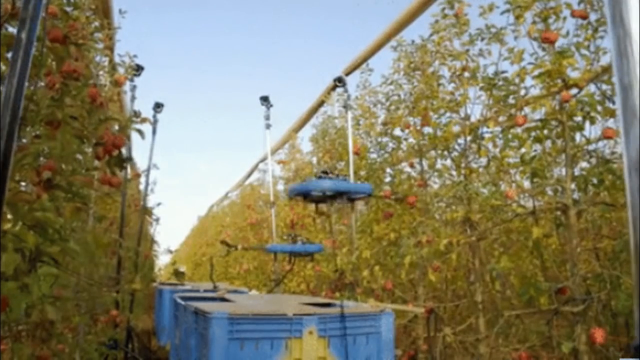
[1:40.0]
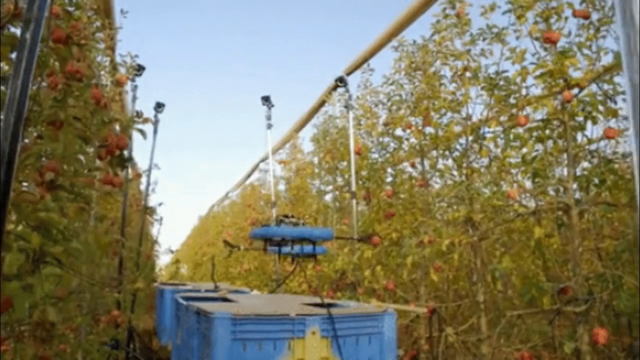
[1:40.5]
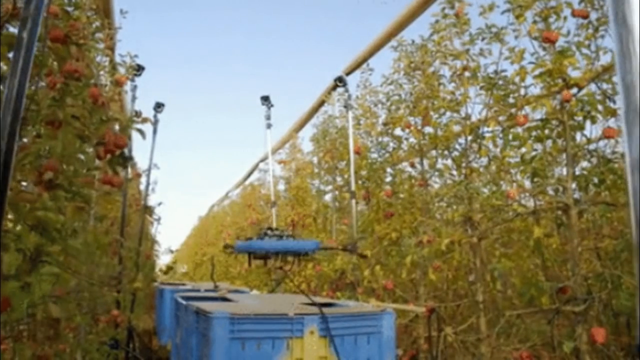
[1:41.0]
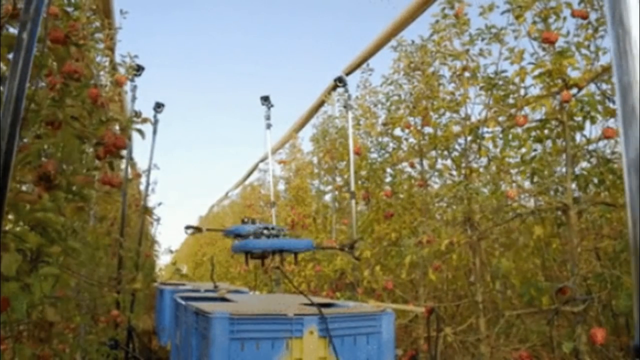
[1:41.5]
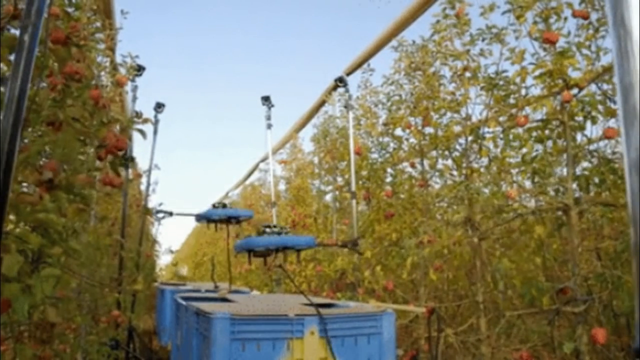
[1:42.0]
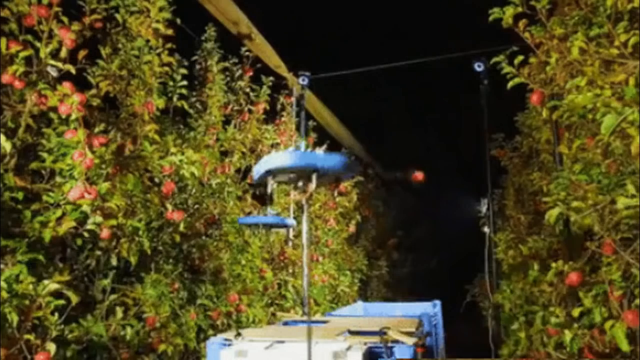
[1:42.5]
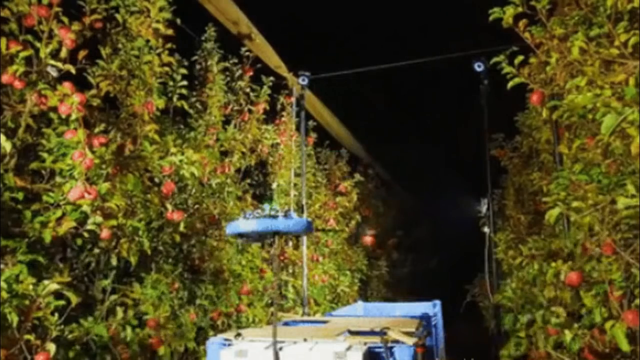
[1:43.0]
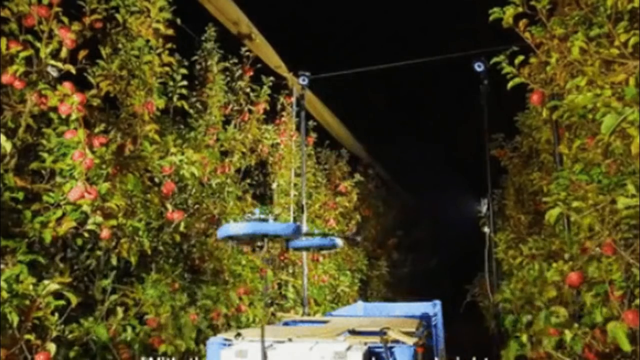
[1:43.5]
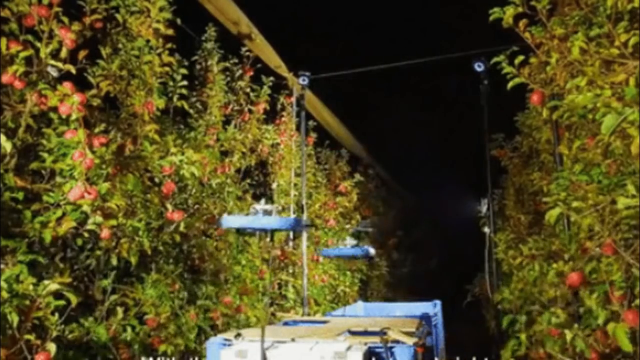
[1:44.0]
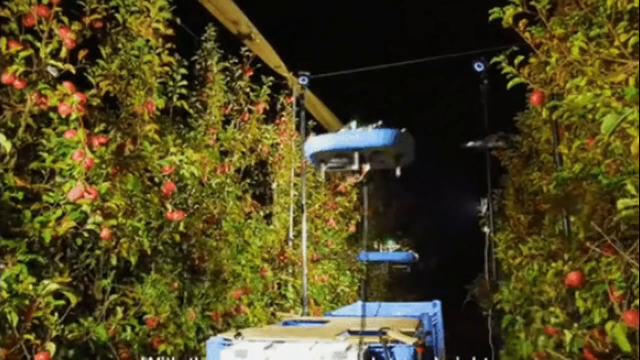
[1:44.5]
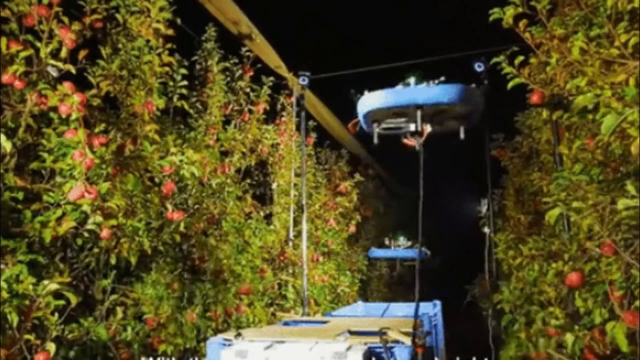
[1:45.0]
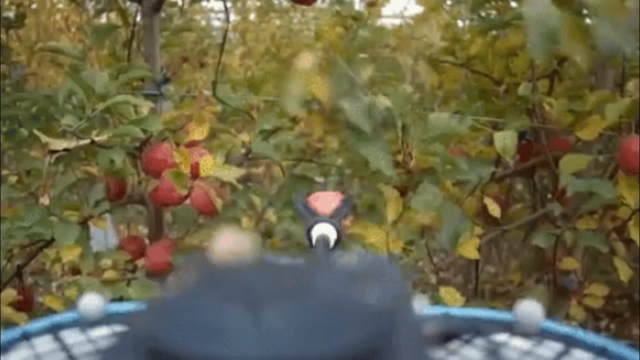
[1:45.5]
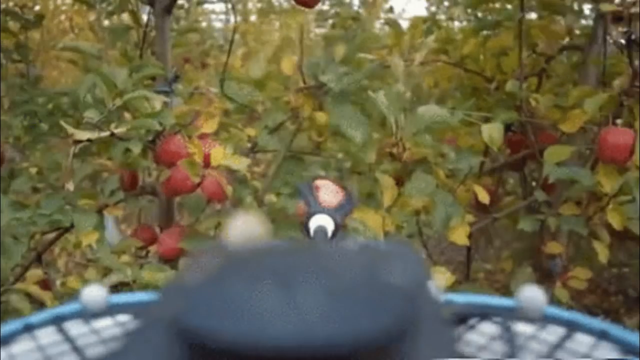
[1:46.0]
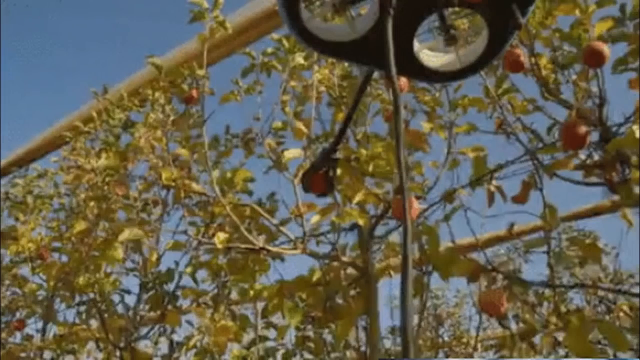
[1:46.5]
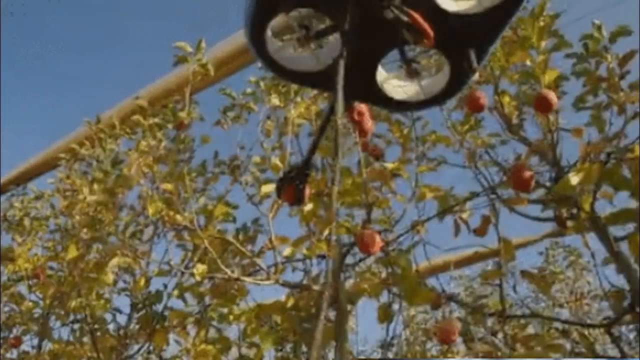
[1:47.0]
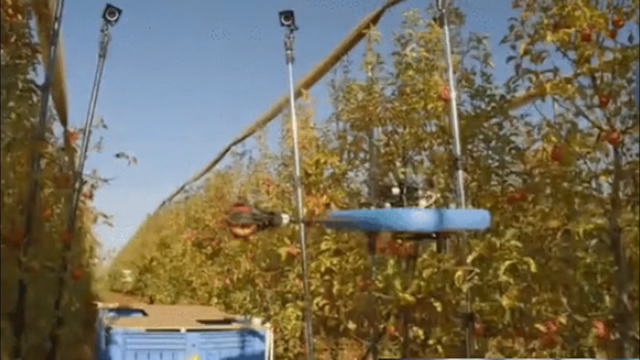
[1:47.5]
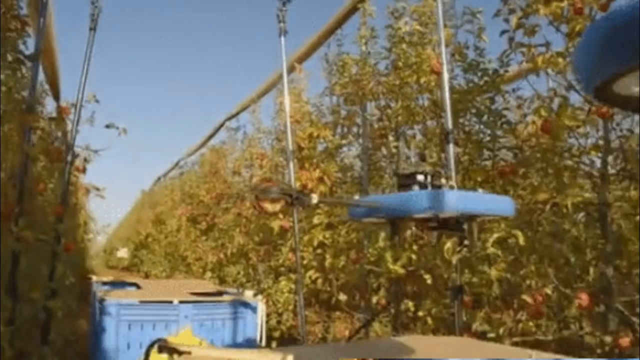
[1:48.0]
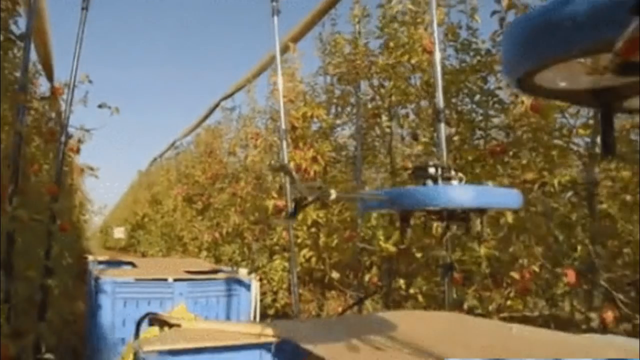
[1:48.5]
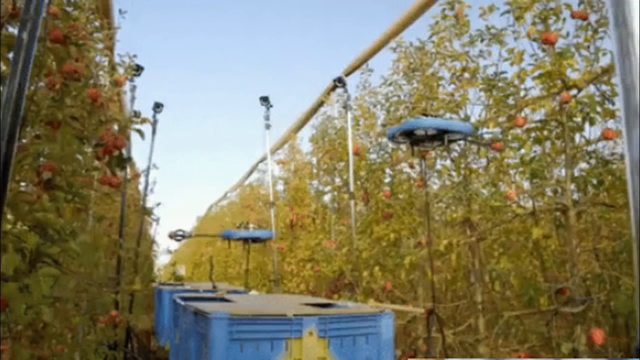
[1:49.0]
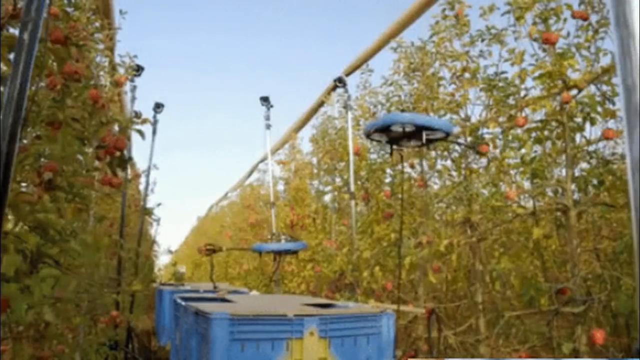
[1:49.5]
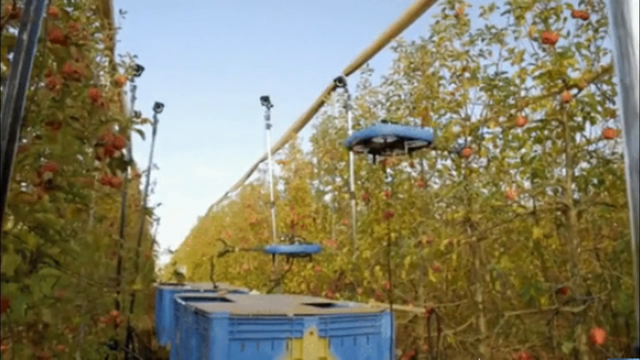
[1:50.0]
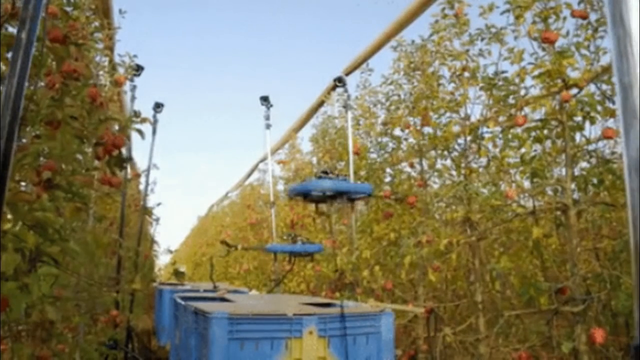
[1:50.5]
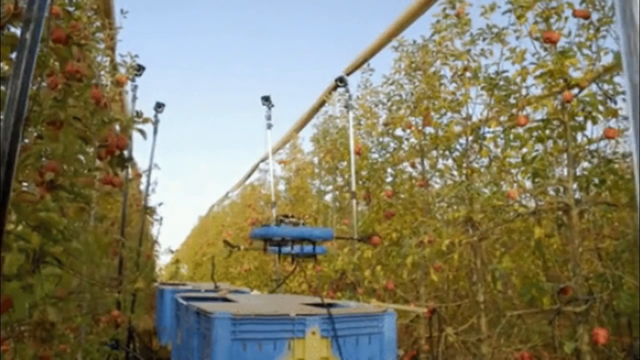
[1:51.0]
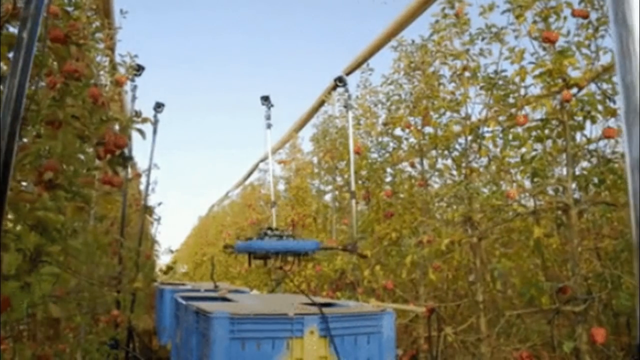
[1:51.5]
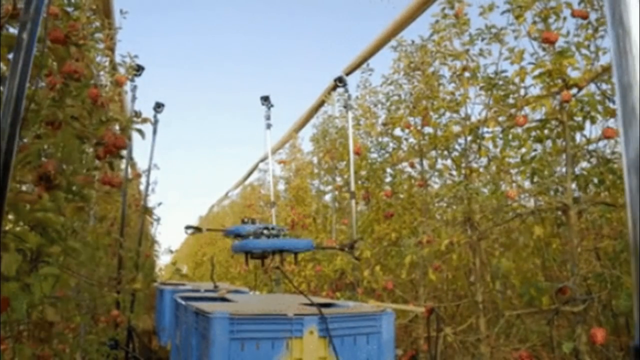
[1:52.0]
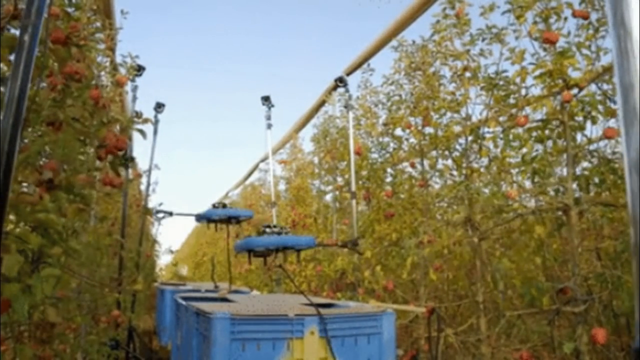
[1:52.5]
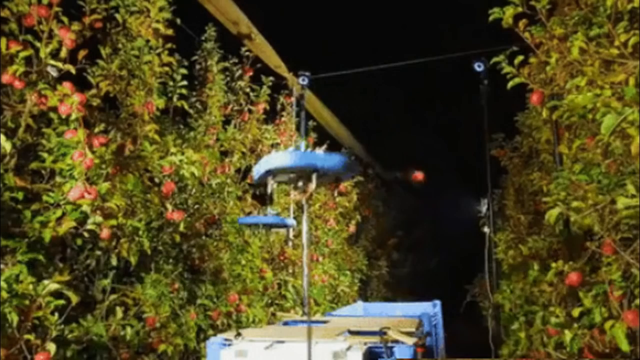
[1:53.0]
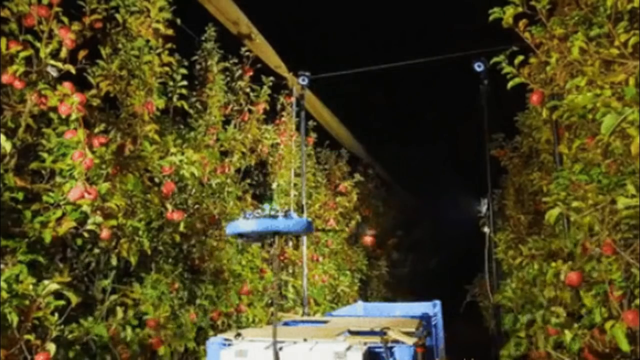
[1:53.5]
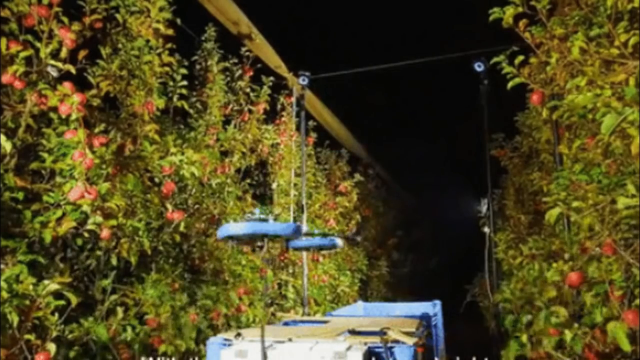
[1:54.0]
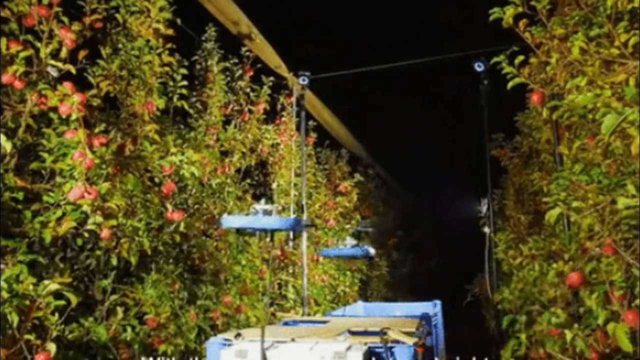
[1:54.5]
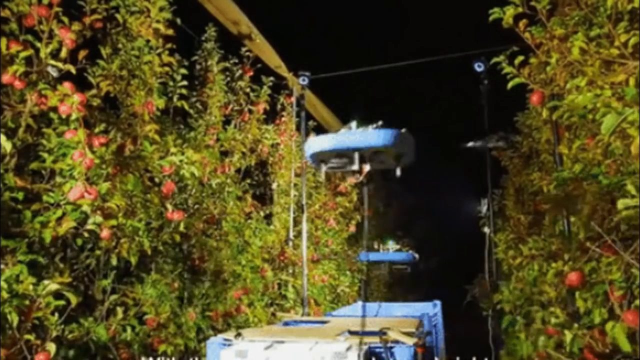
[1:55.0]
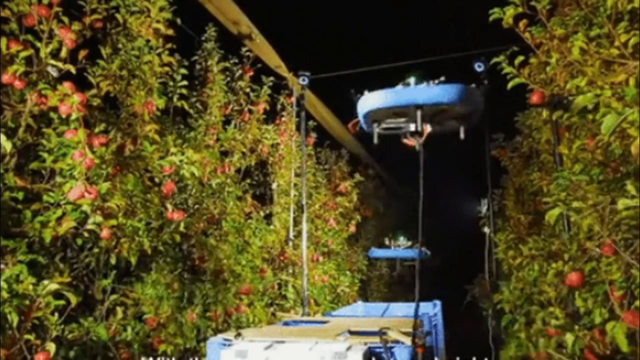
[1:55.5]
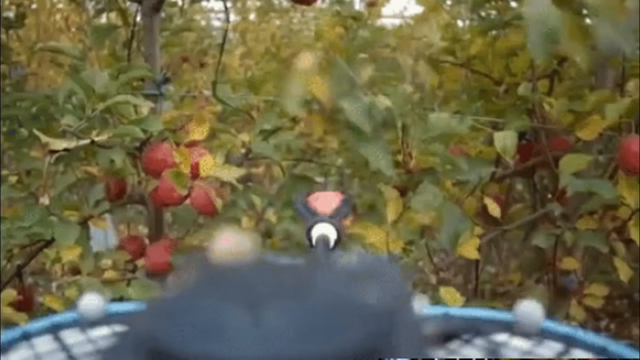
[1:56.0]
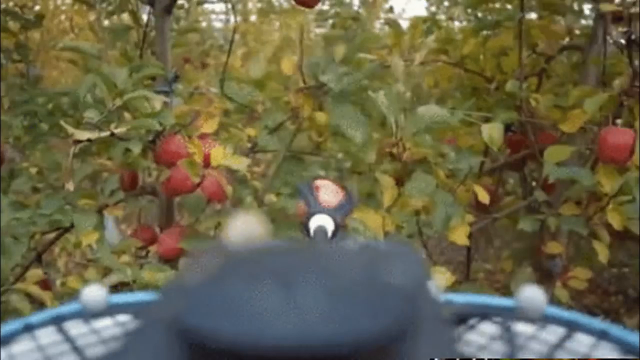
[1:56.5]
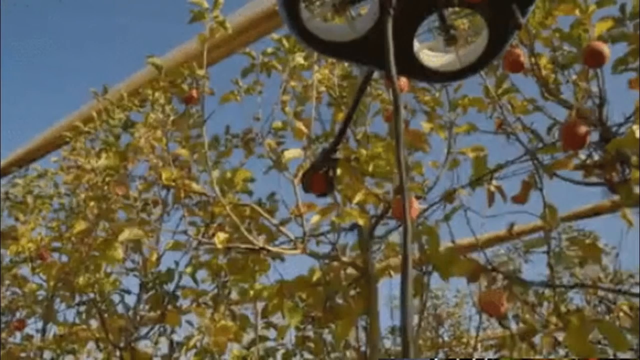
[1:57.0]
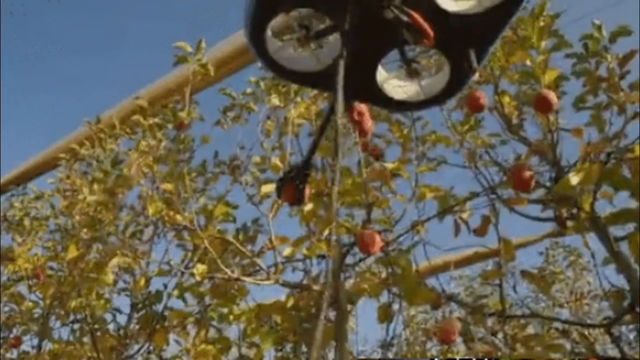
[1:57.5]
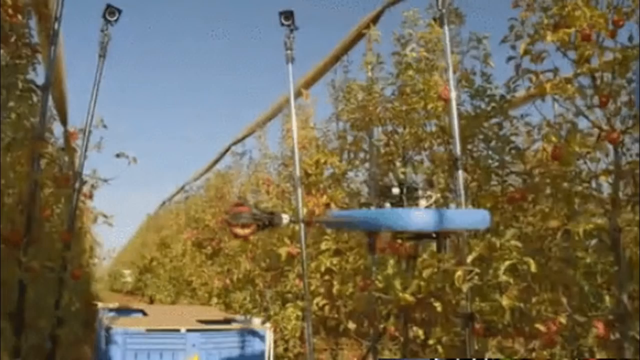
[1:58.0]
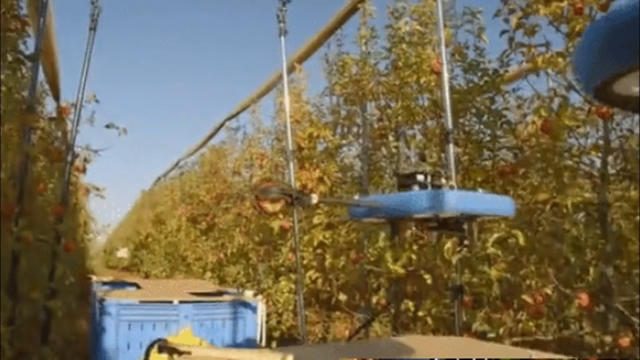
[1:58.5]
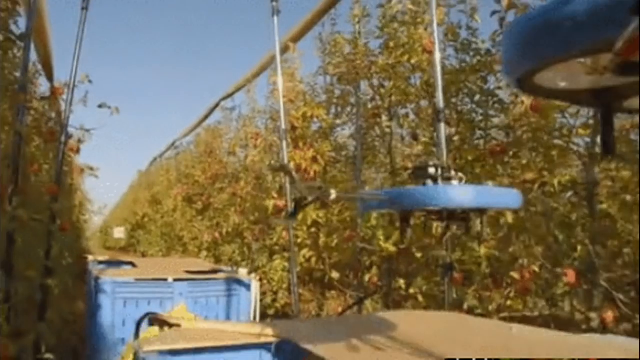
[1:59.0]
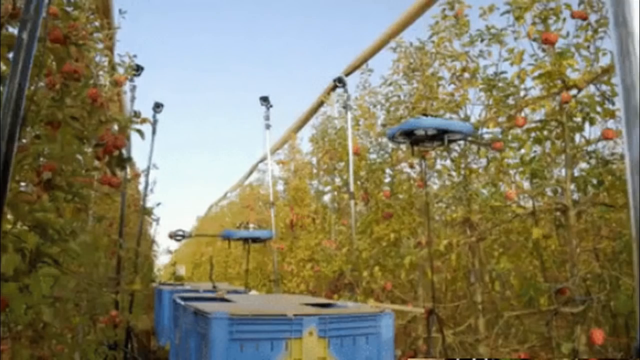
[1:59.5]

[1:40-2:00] During the daytime, a row of fruit trees is shown with equipment monitoring it. The scene quickly turns to night, and the equipment still moves about checking on the fruit. At night, lights on it illuminate the area with a very bright light.